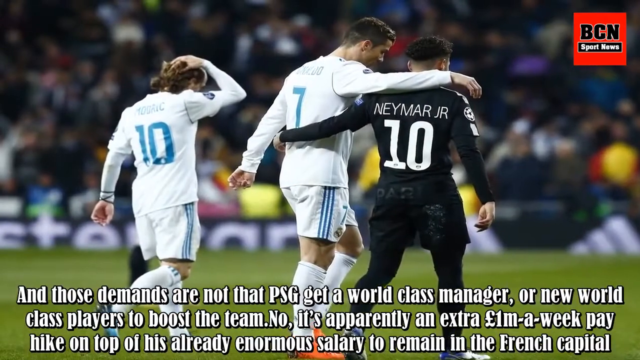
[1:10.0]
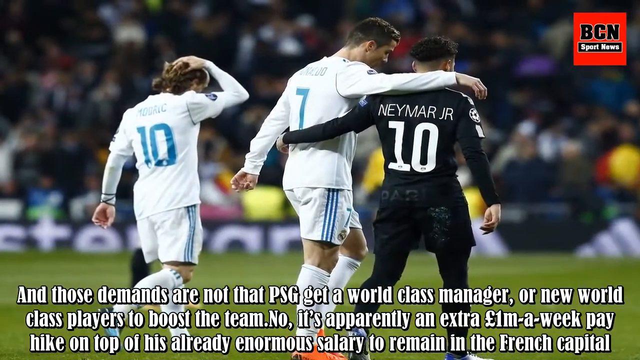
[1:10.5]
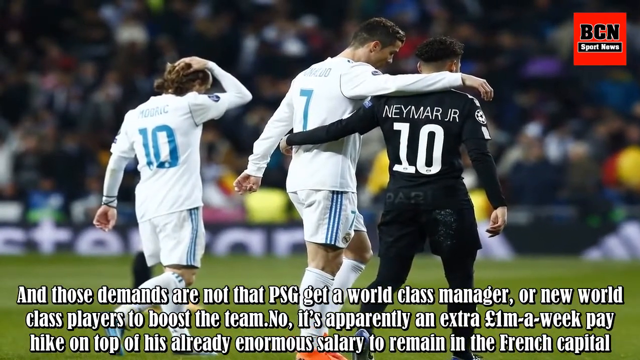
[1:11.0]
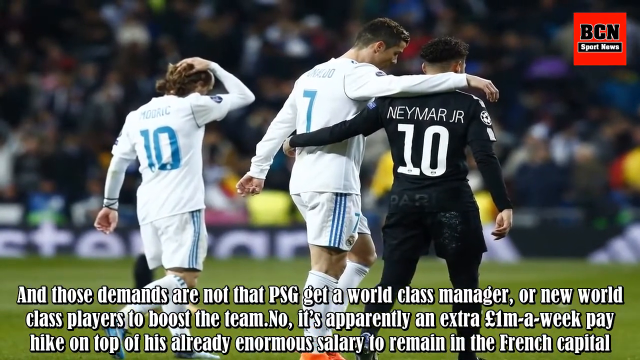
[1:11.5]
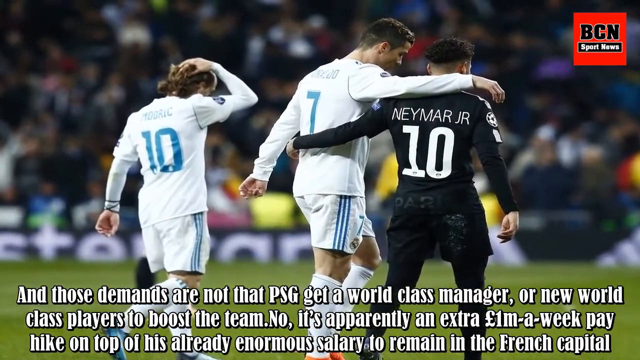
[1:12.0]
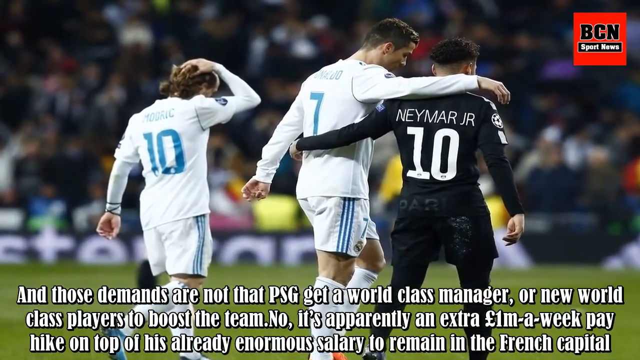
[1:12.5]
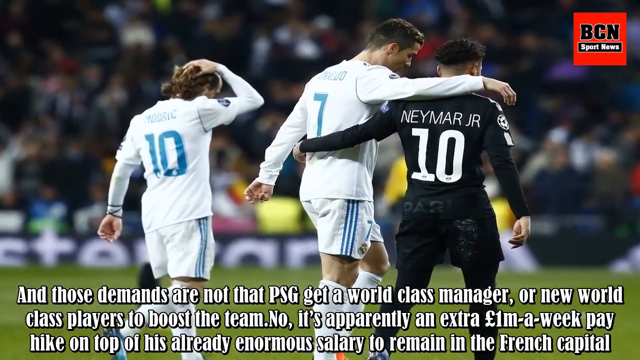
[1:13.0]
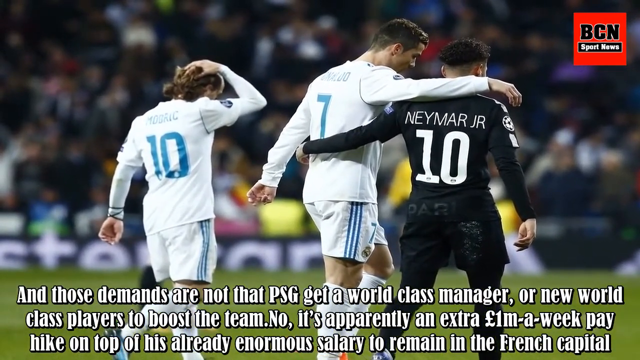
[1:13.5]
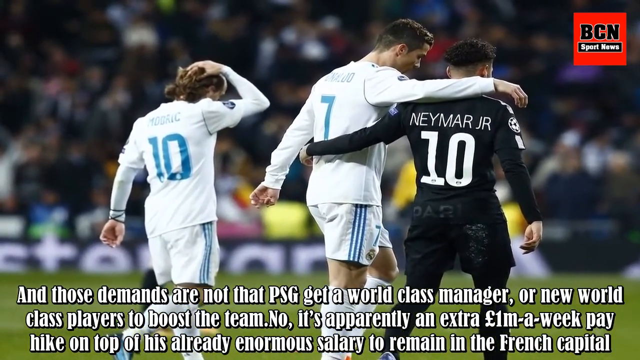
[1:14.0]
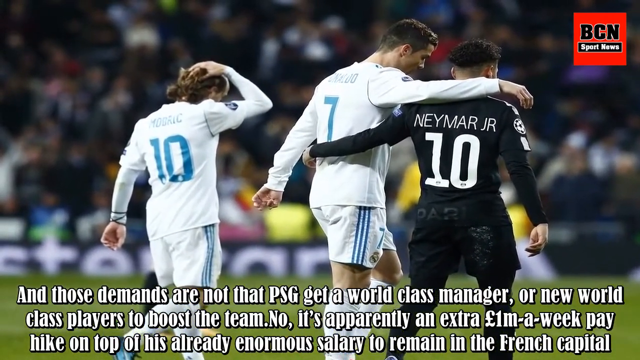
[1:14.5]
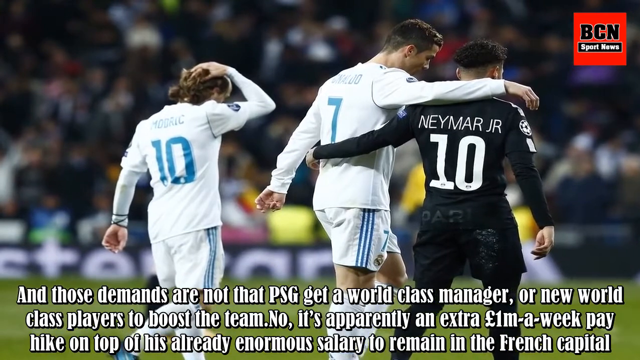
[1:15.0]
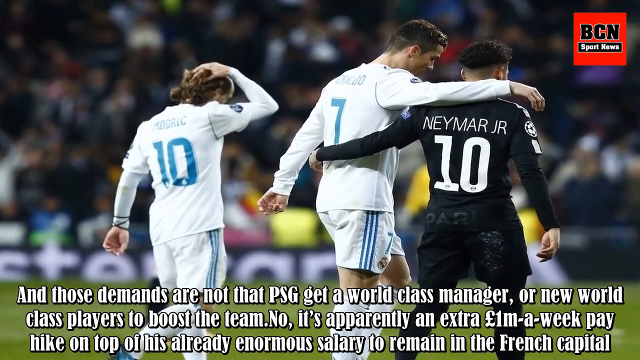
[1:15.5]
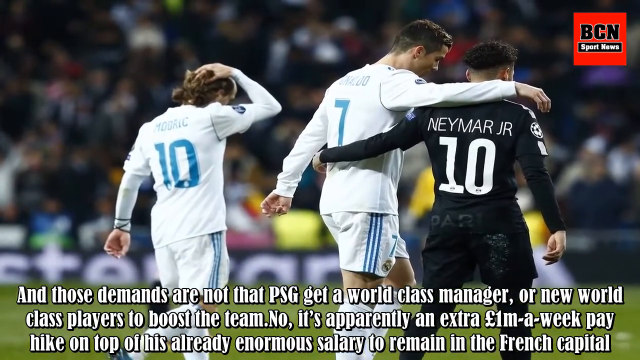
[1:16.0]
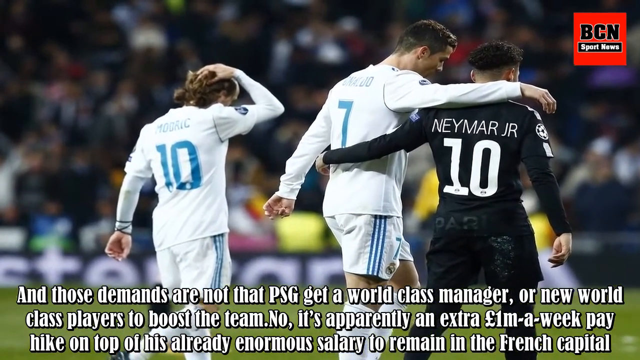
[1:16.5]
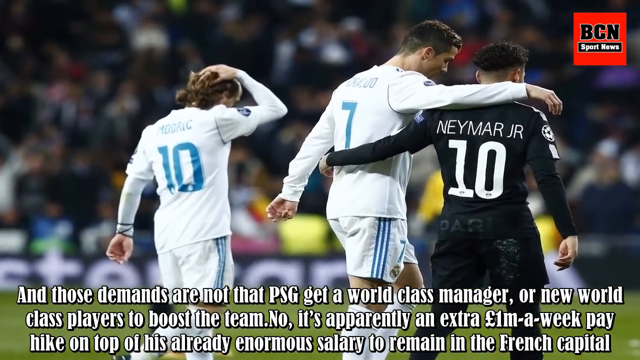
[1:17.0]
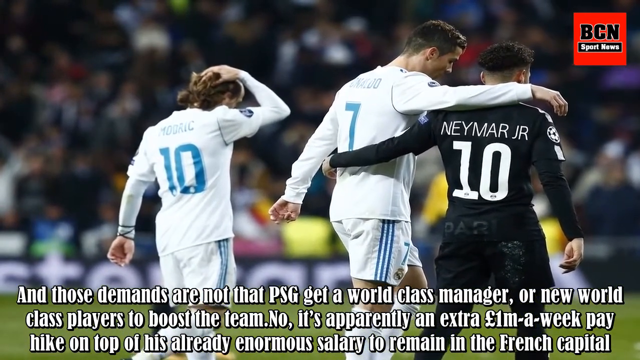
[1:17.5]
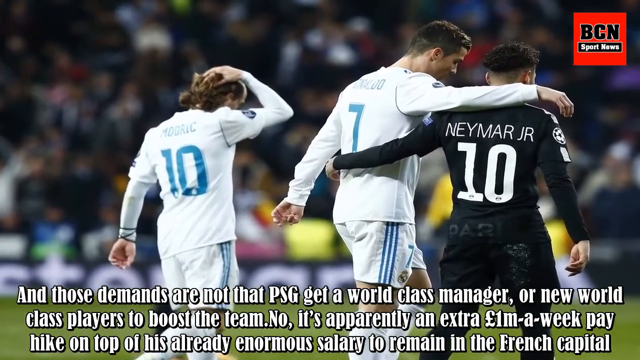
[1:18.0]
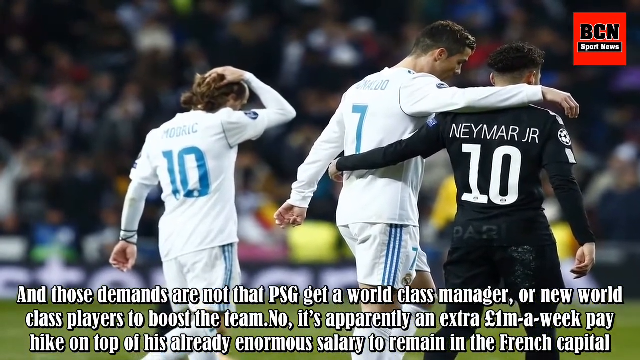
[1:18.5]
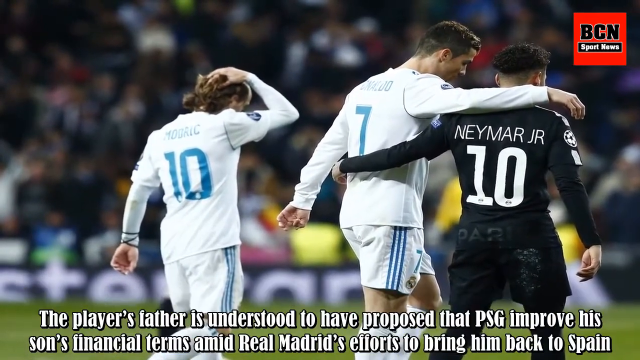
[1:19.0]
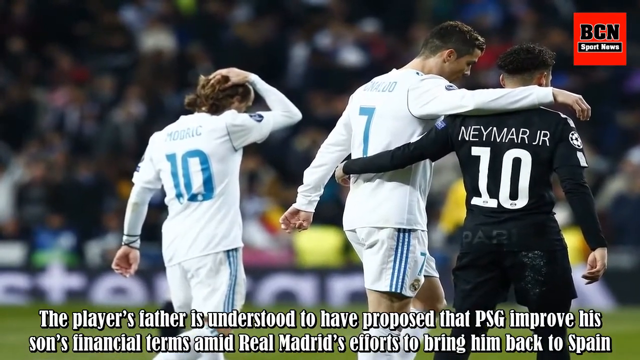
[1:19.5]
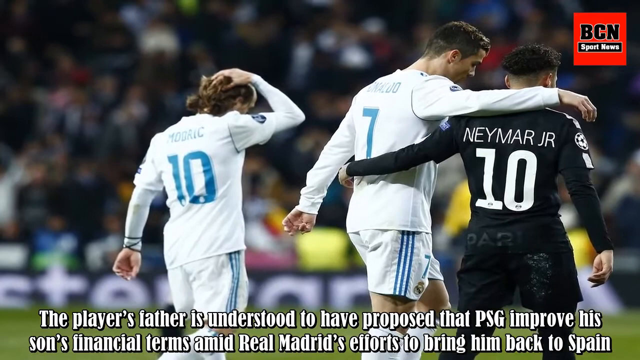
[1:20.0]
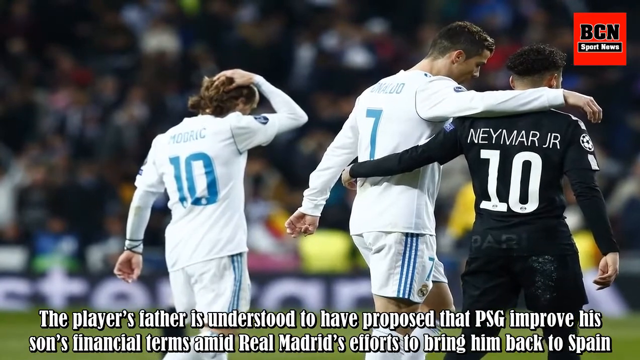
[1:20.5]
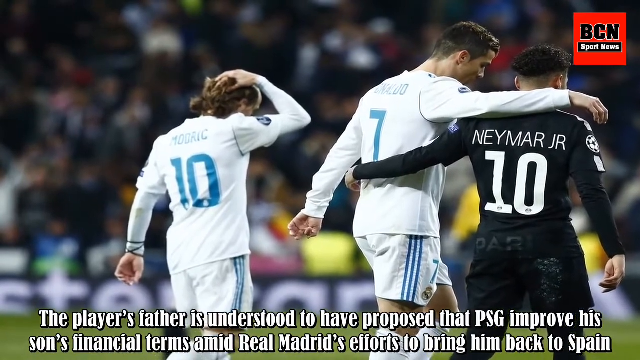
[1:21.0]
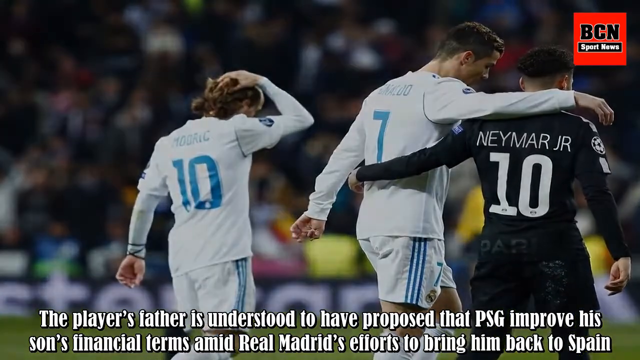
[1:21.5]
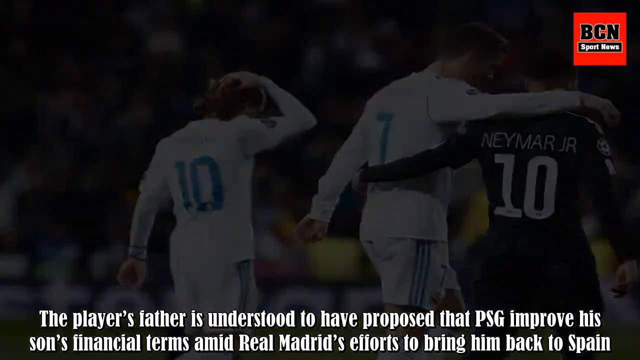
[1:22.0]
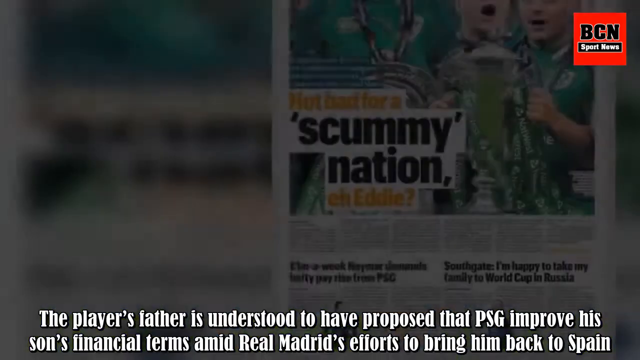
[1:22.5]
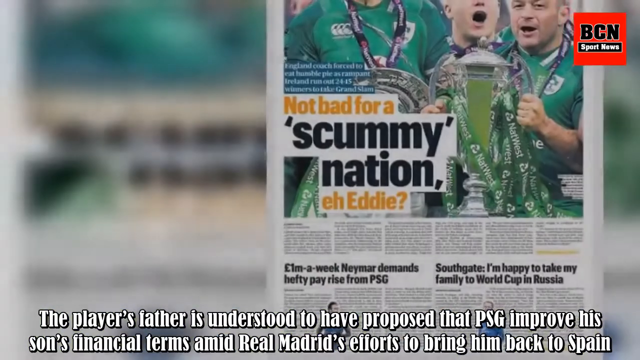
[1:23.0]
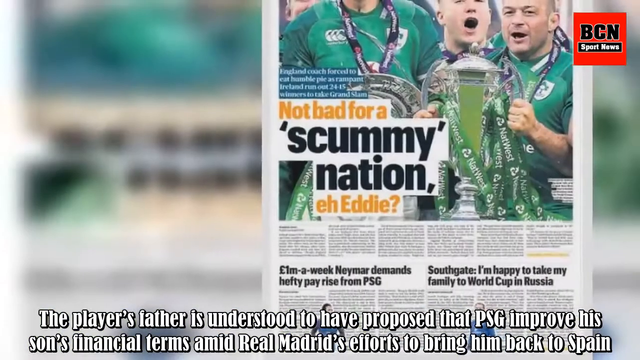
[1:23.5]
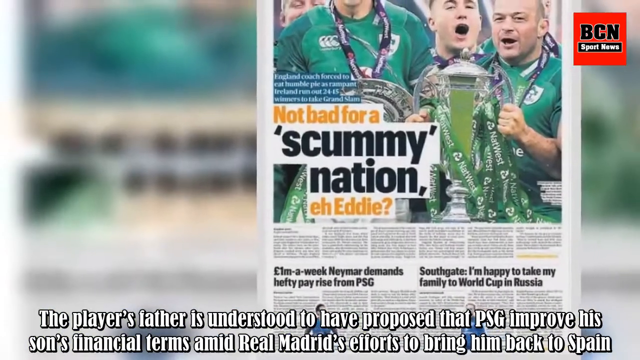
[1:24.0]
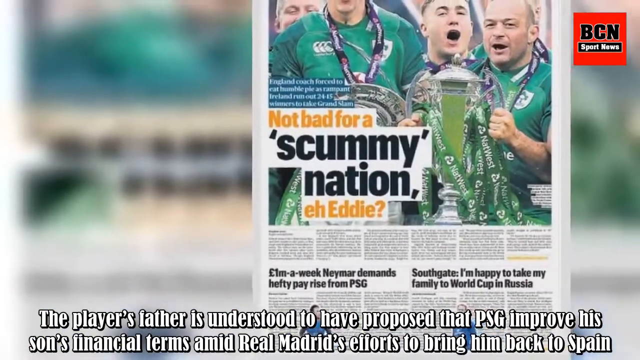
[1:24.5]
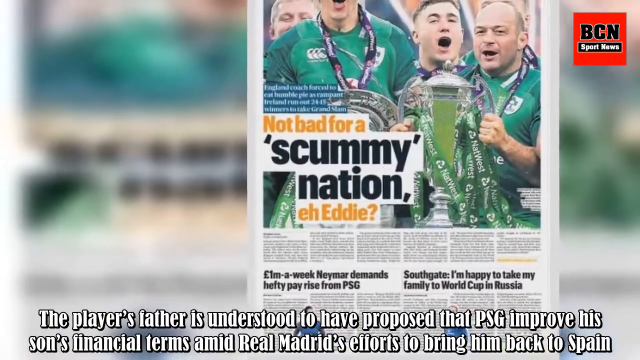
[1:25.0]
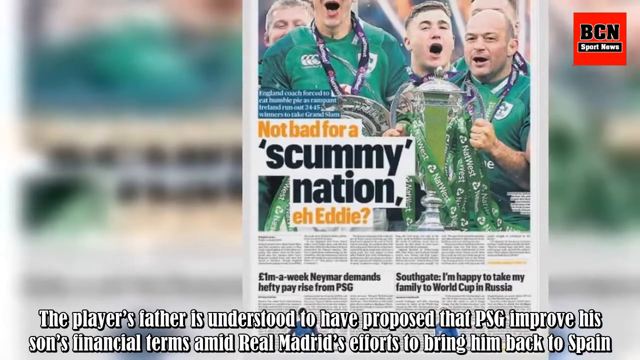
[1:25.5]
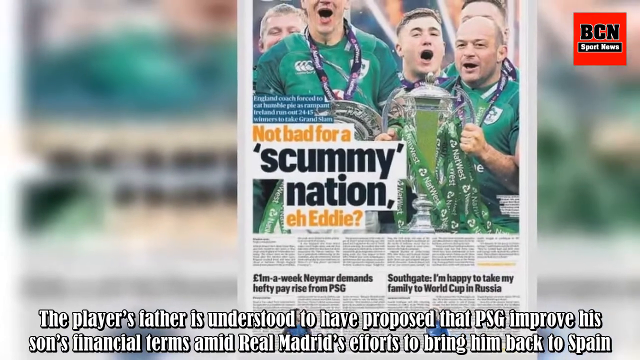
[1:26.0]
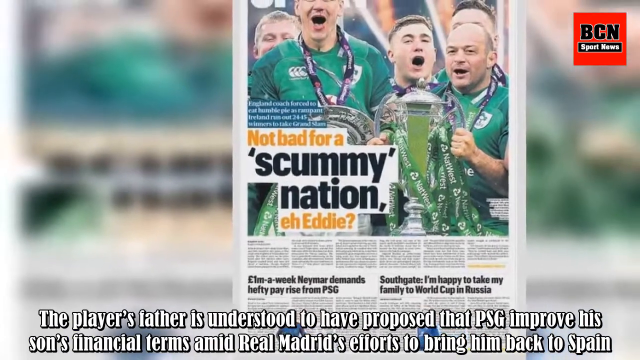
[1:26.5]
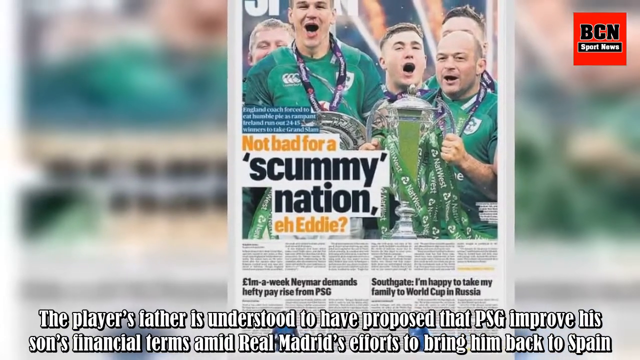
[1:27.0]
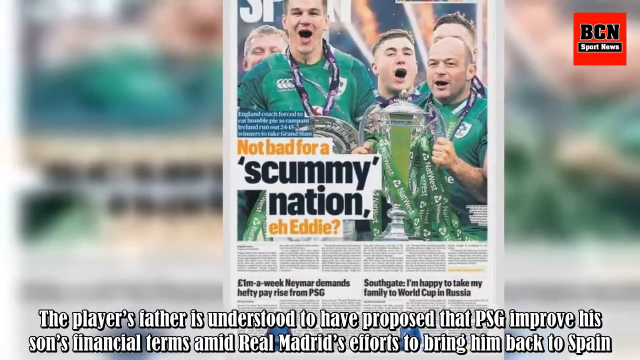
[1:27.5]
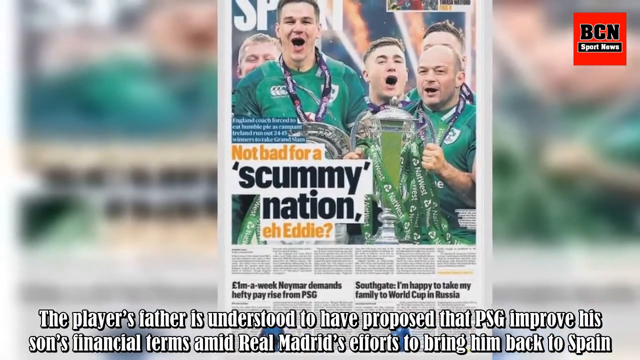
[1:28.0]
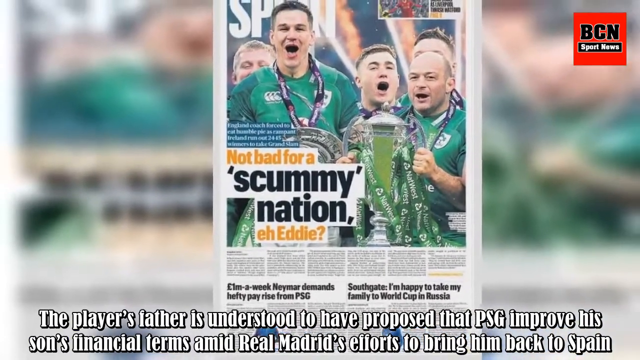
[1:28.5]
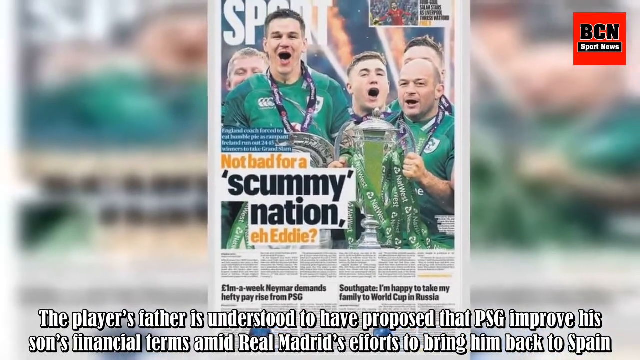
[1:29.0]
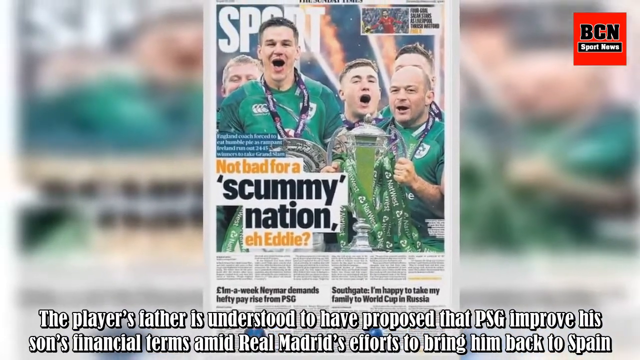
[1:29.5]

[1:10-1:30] The bottom text continues: "manager or new world-class players to boost the team. No, it's apparently an extra 1 million pounds a week", ending "on top of his already enormous salary to remain in the French capital." The text then says "the player's father is understood to have proposed that PSG improve his son's financial terms amid Real Madrid's efforts to bring him back to Spain." A shaky camera returns to the newspaper article and clipping at the very bottom, which has a different headline: "$1 million a week. Neymar demands happy pay rise from PSG." To the right of this article is another headline article that says "Southgate happy to take family to World Cup". All of this is below the "Not Bad for a Scummy Nation" headline and the picture of the green team holding trophies, as if they have just won a championship.